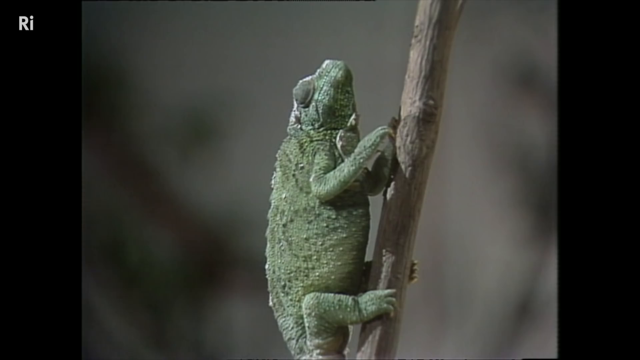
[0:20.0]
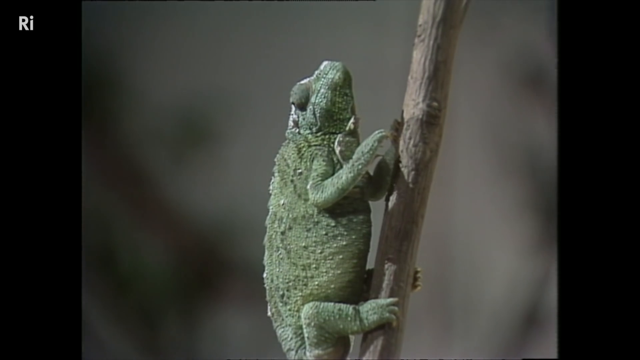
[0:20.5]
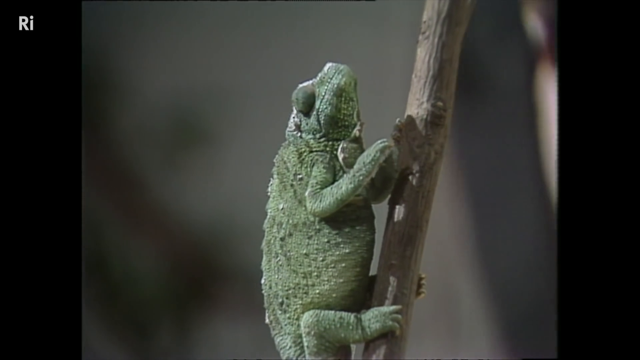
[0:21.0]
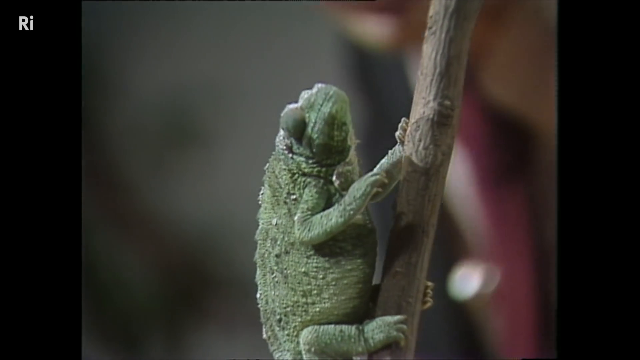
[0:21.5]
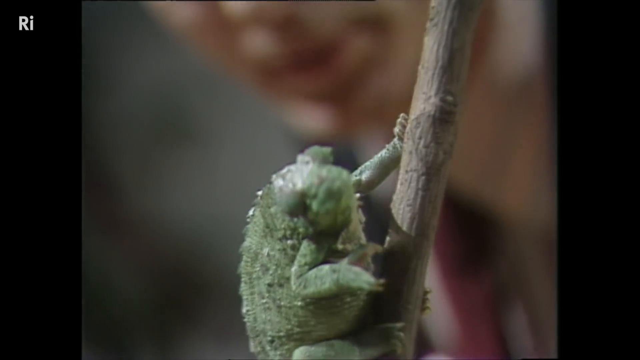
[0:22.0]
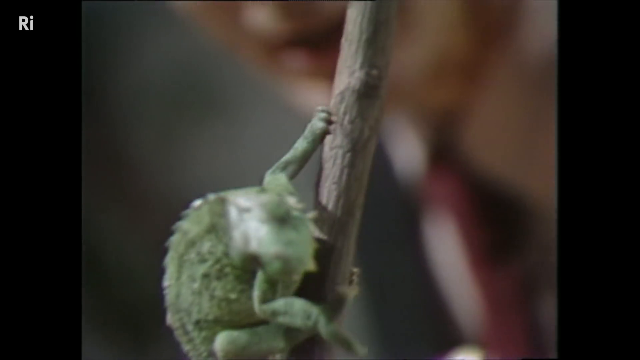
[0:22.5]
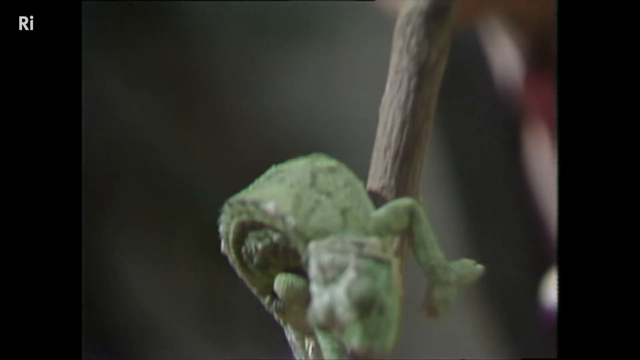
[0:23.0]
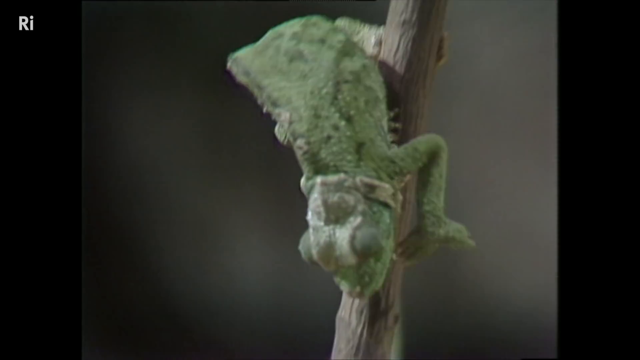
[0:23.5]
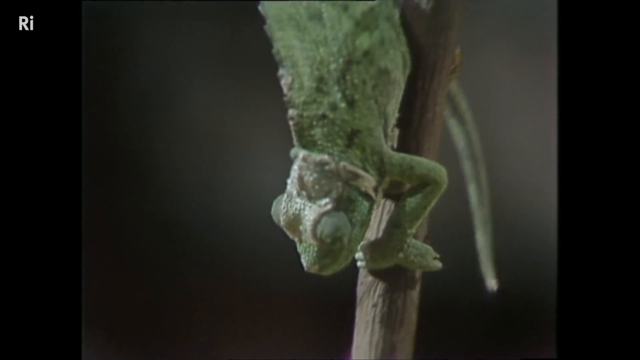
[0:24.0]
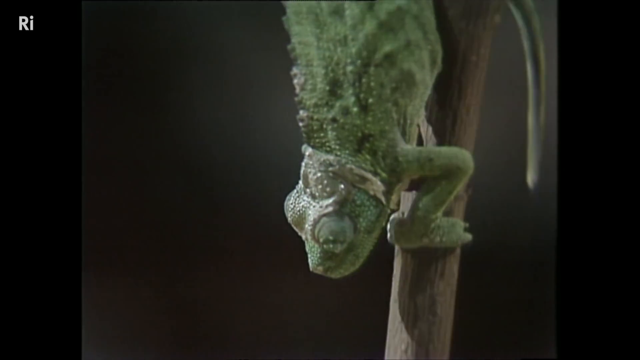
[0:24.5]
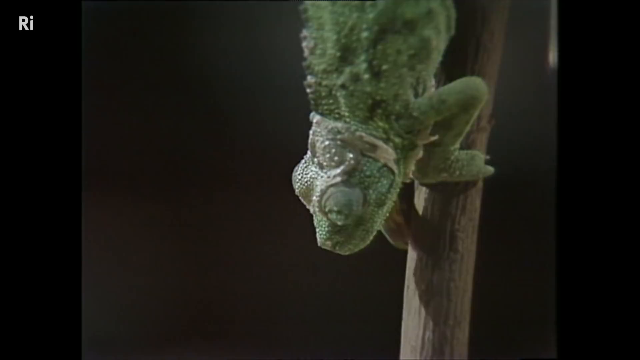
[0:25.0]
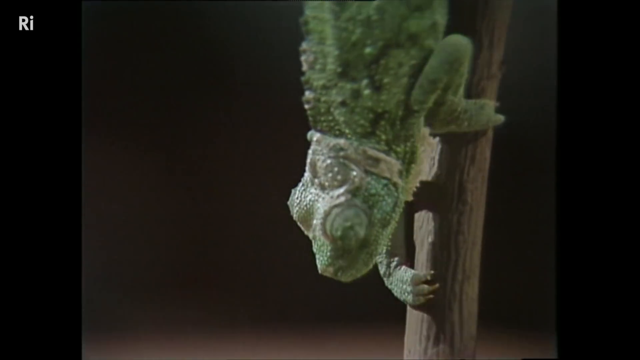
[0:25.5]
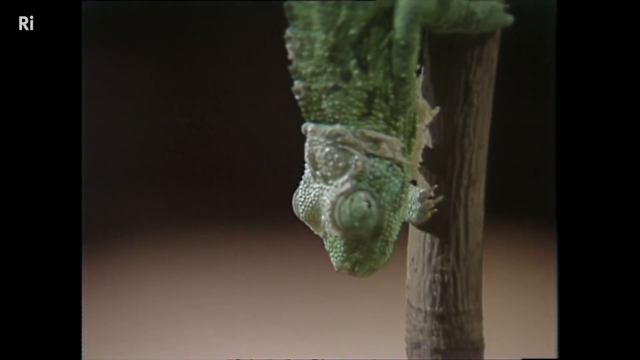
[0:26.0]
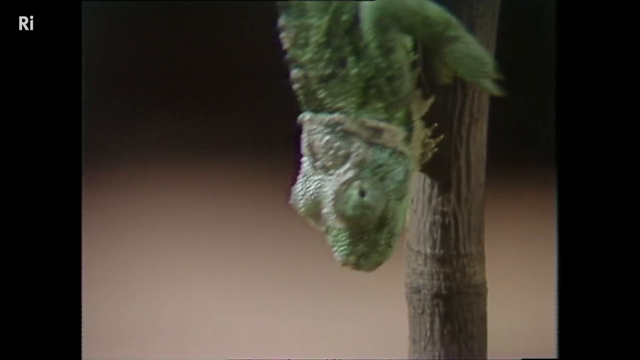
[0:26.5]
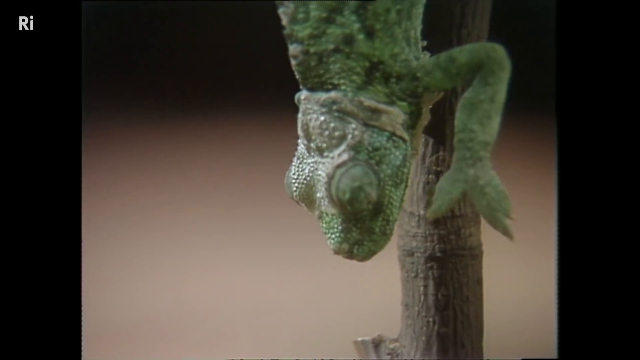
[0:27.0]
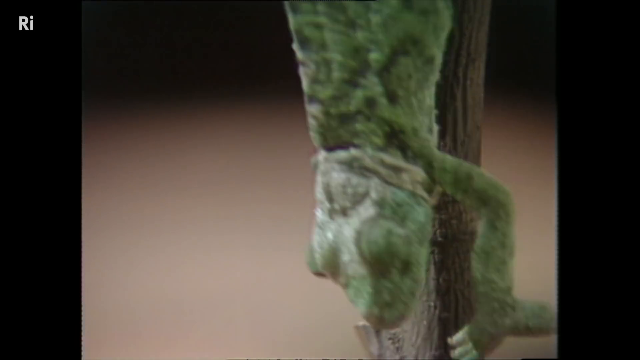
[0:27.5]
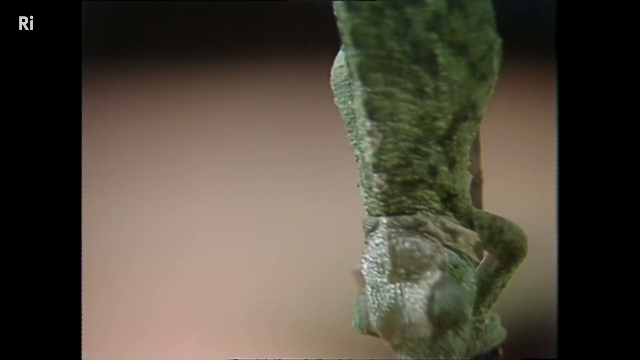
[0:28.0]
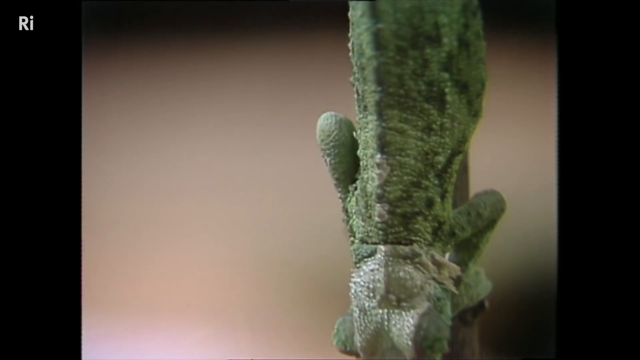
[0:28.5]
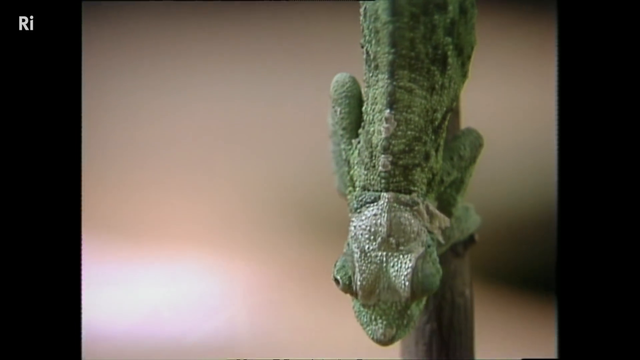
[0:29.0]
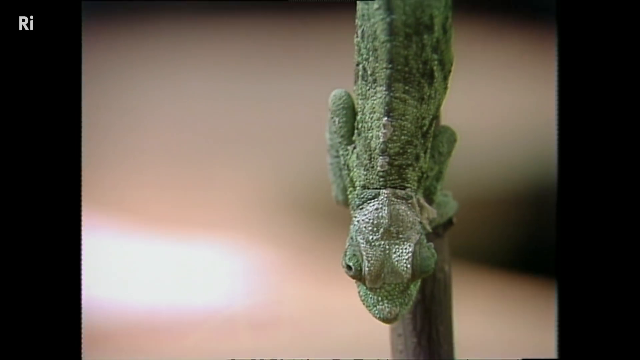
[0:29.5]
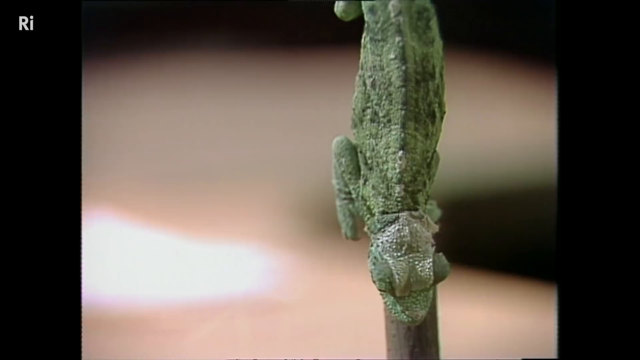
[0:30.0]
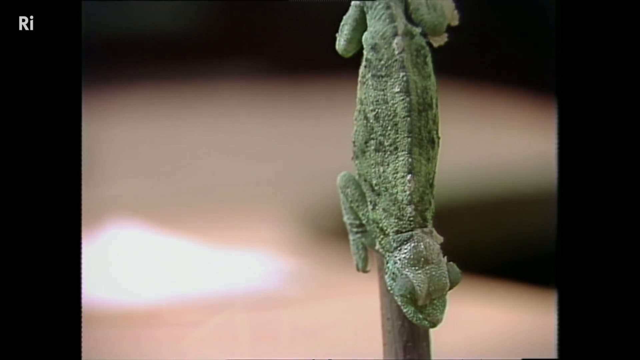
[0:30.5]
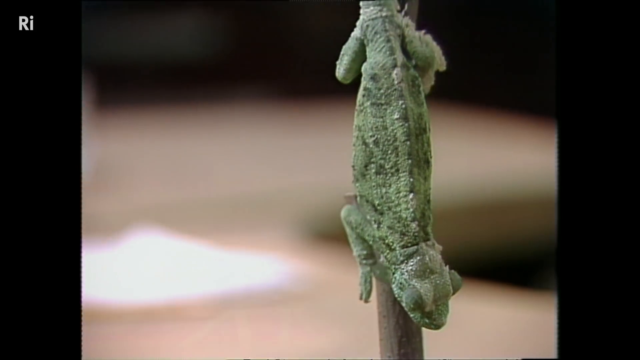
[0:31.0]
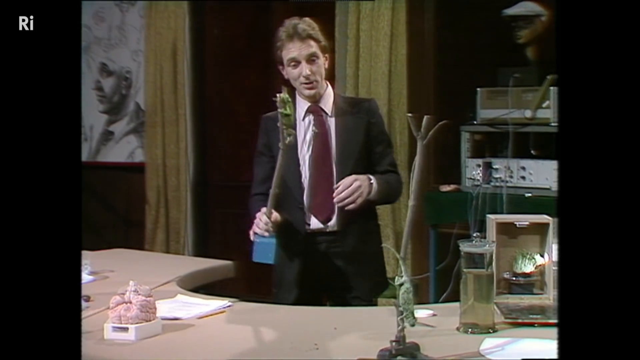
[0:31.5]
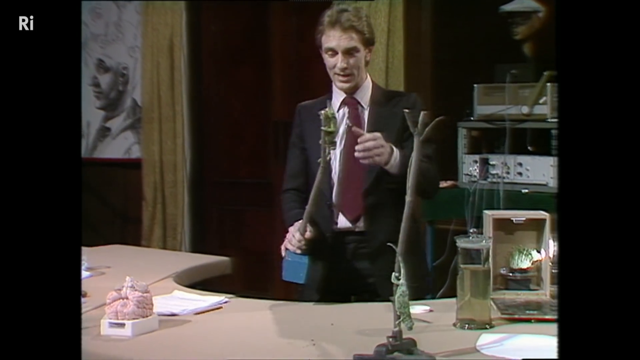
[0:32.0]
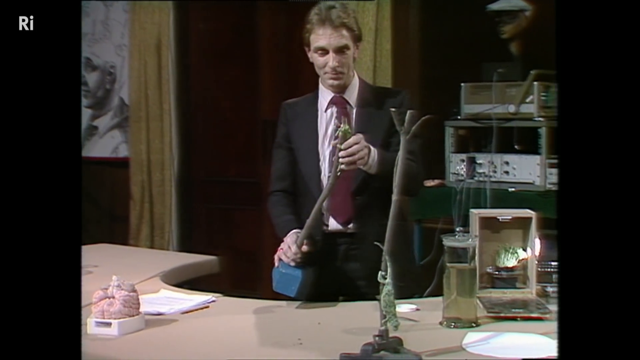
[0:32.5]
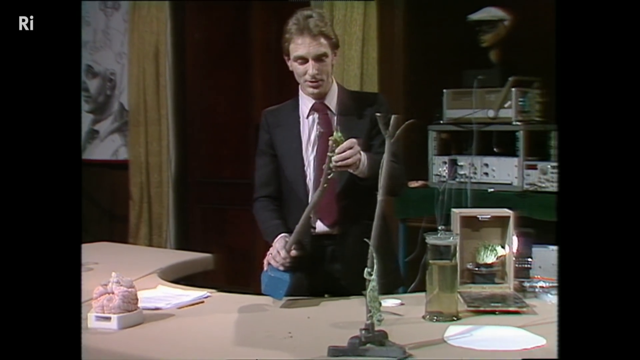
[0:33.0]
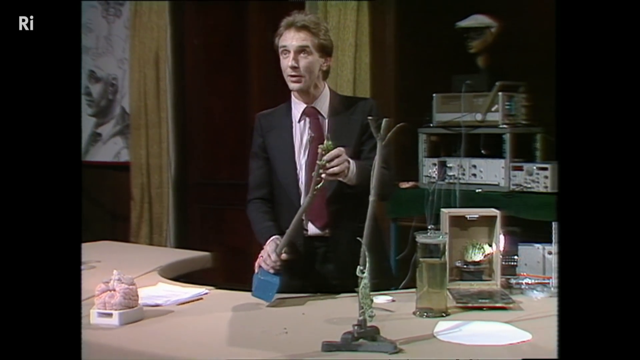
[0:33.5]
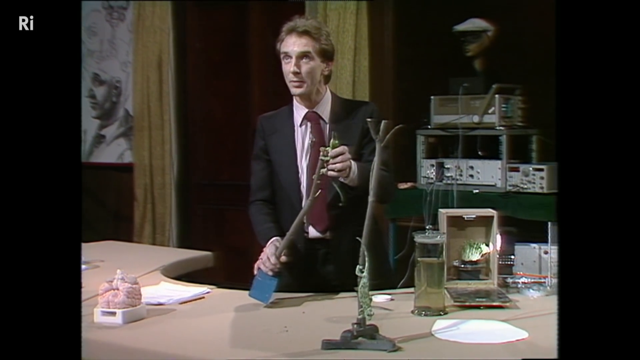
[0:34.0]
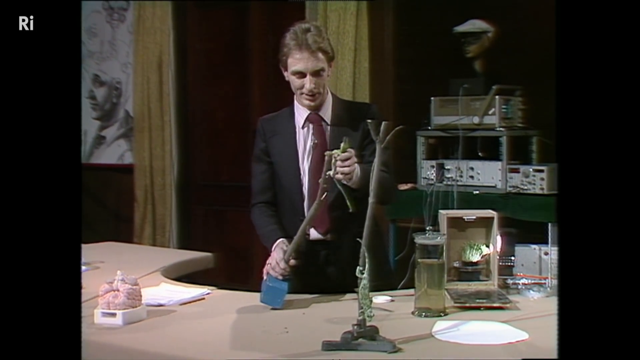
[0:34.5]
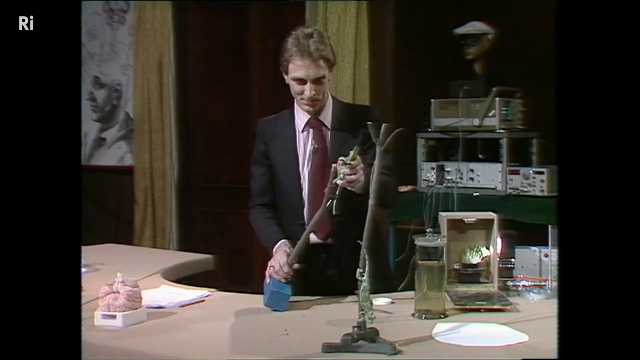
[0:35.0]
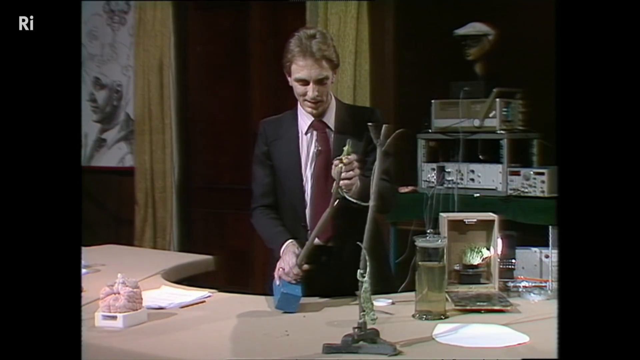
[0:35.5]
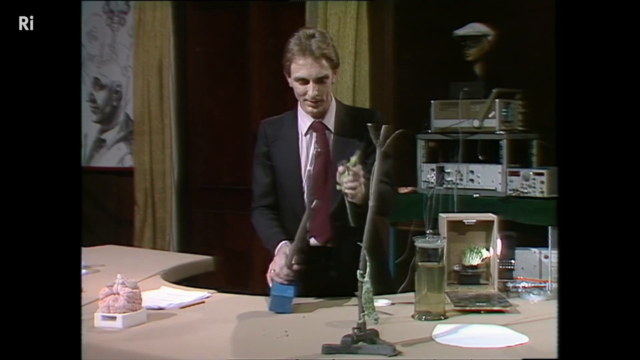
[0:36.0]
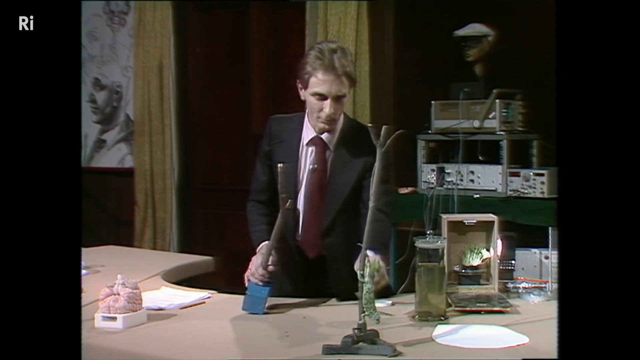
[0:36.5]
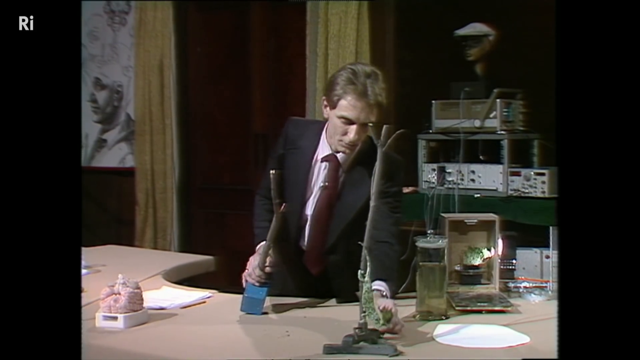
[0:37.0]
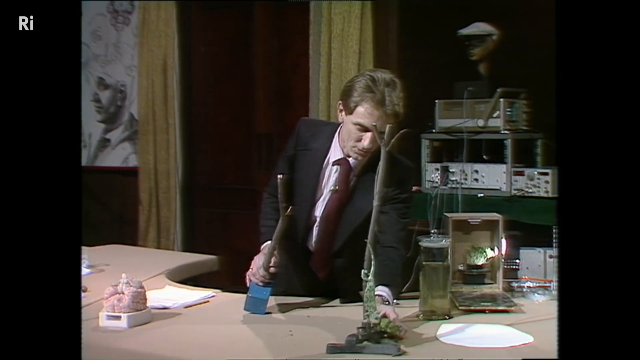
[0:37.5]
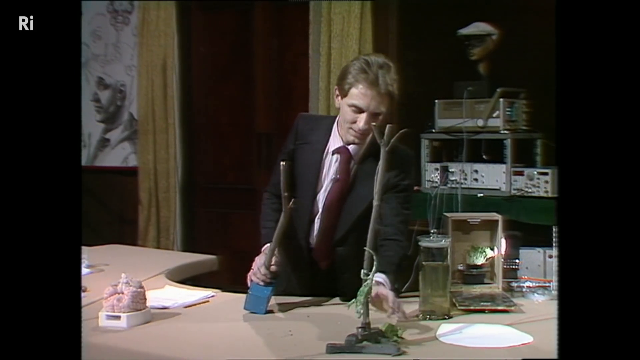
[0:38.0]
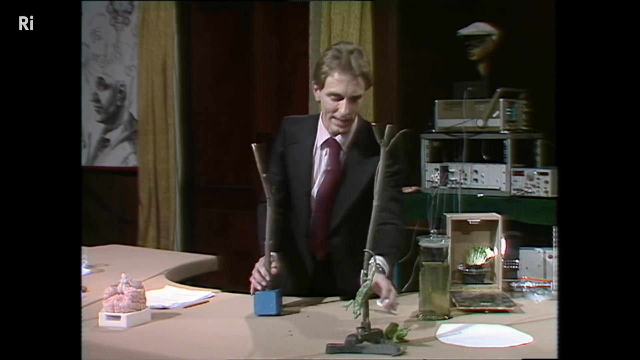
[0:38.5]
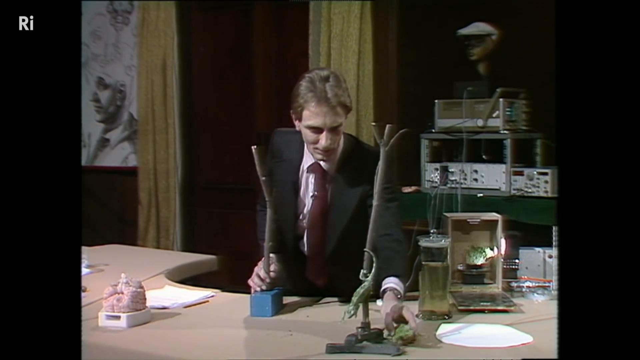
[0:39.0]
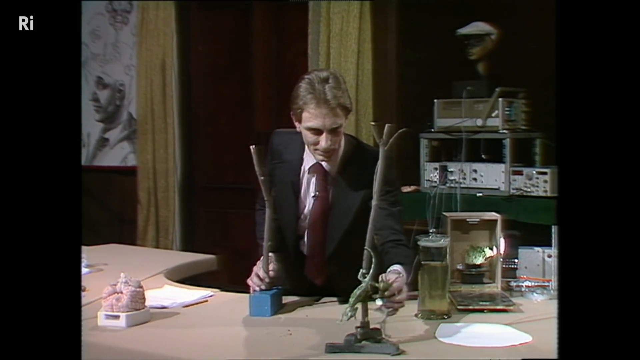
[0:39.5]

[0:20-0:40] An up-close shot shows an iguana on a stick against a blurred background, the iguana the main focus as the camera slowly pans in. A man is visible, blurry, in the background. The iguana starts to turn around on the stick and climb downwards, and the camera pans down very slowly to follow it, staying in a zoomed-in close-up. The camera then pans out slowly to show the iguana. The scene transitions back to the man's room, where the man in a black suit with a white shirt underneath and a red tie holds another stick with an iguana on it, while the other iguana continues to climb downward on the stick the camera was zoomed in on.